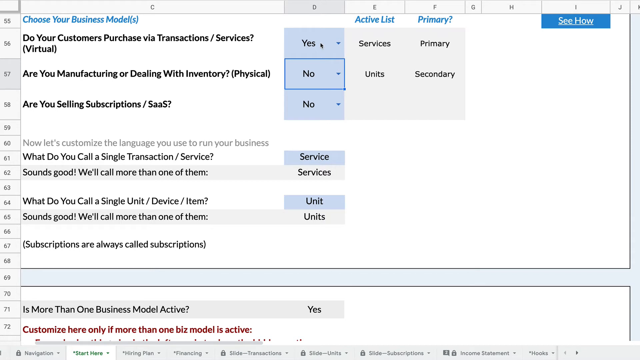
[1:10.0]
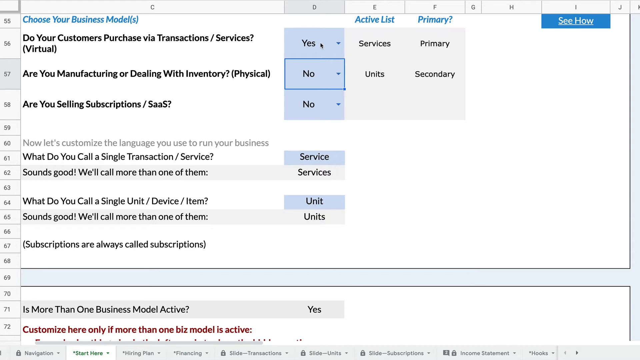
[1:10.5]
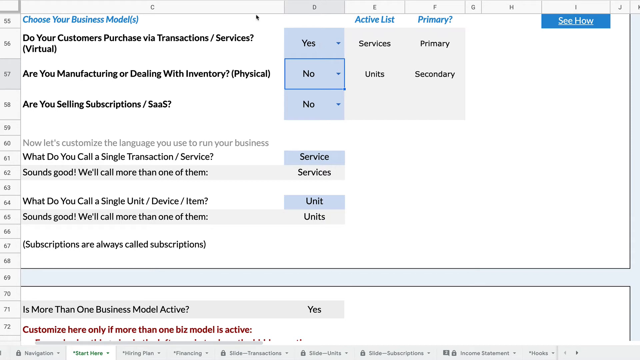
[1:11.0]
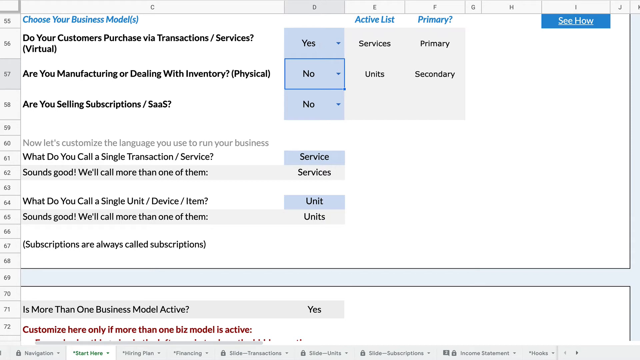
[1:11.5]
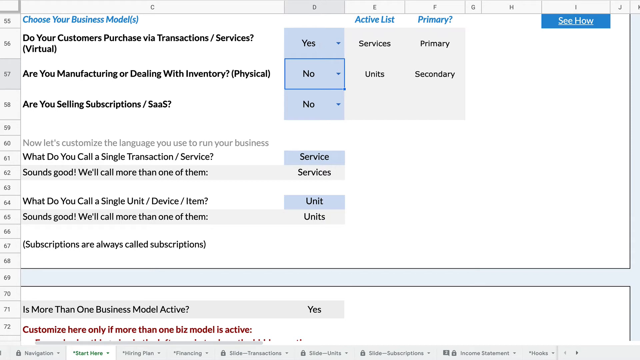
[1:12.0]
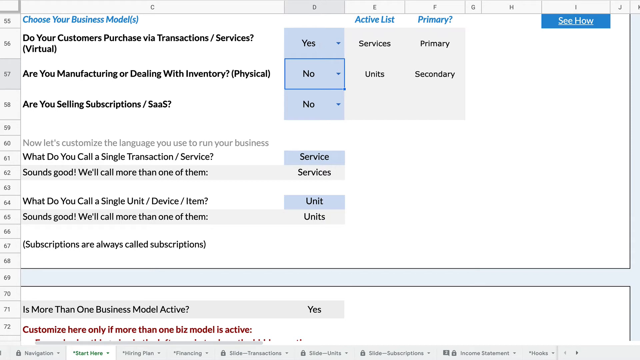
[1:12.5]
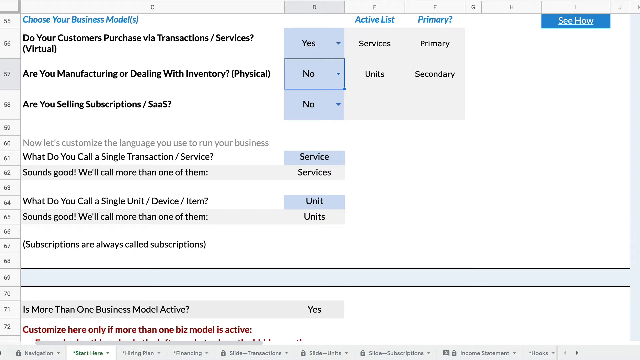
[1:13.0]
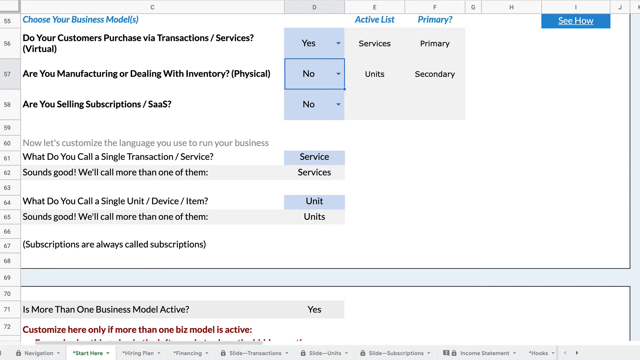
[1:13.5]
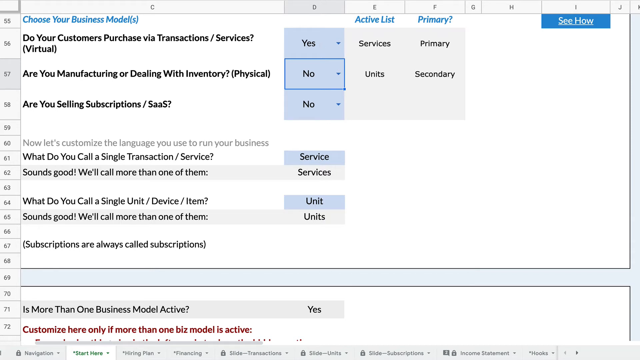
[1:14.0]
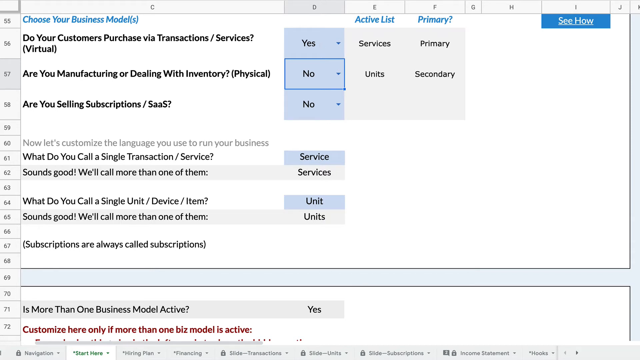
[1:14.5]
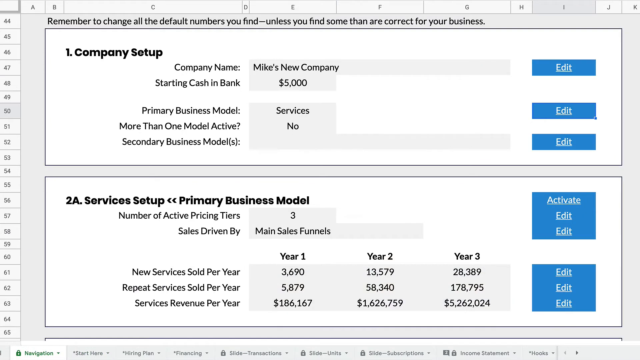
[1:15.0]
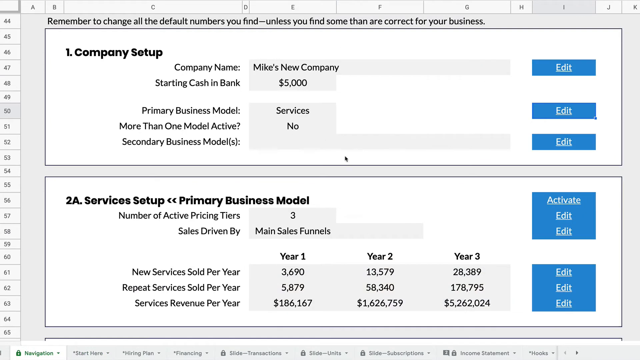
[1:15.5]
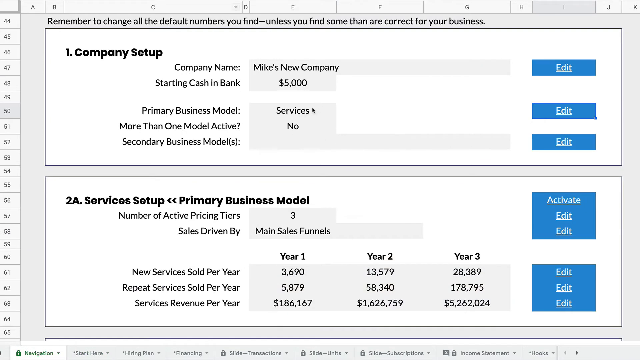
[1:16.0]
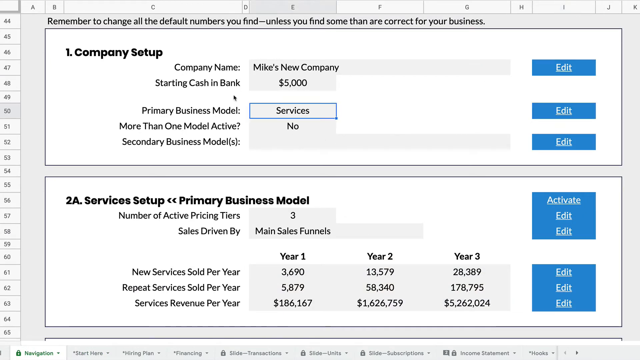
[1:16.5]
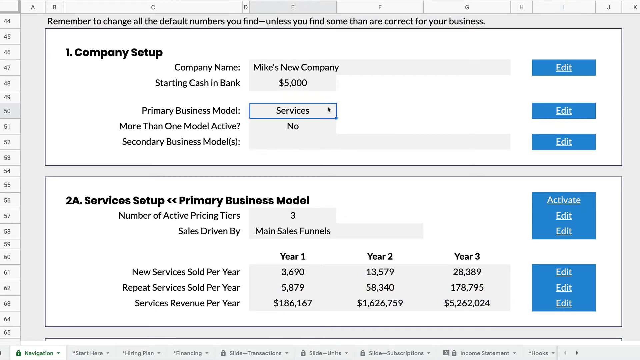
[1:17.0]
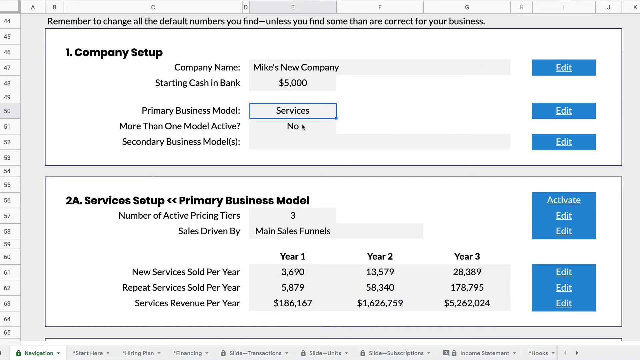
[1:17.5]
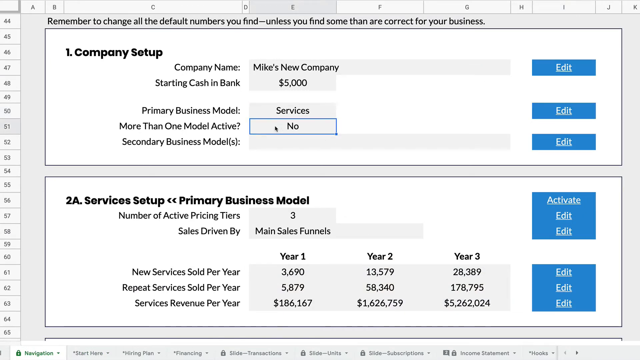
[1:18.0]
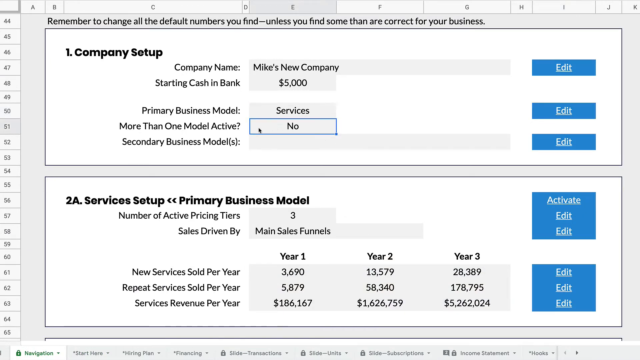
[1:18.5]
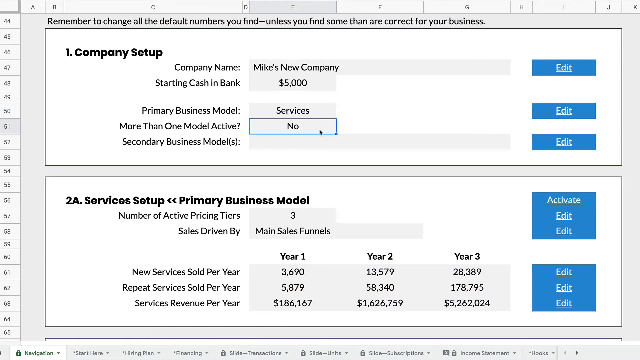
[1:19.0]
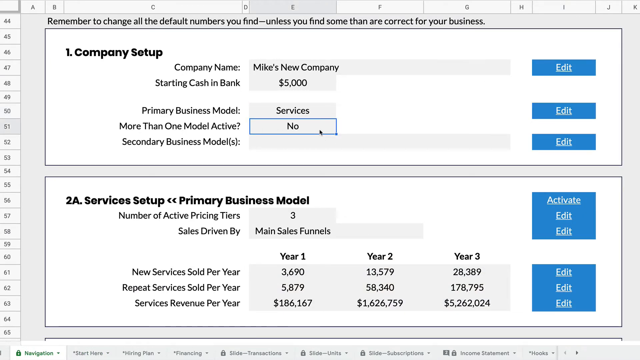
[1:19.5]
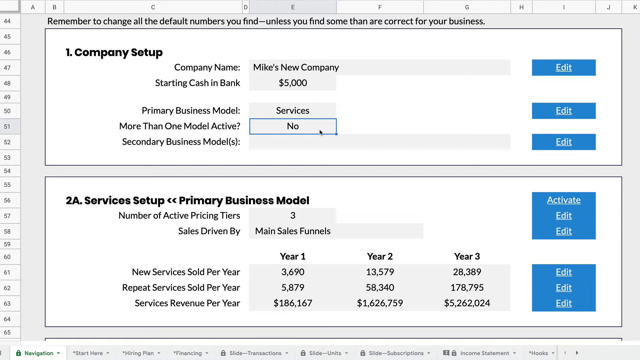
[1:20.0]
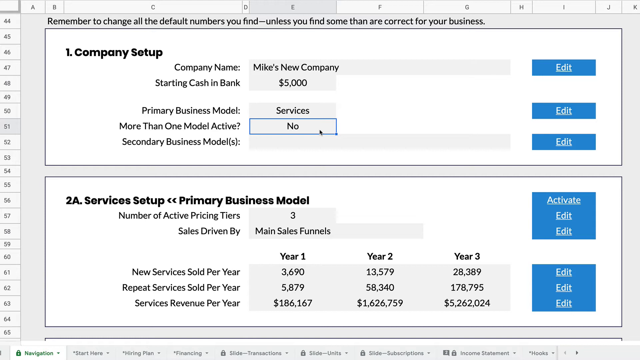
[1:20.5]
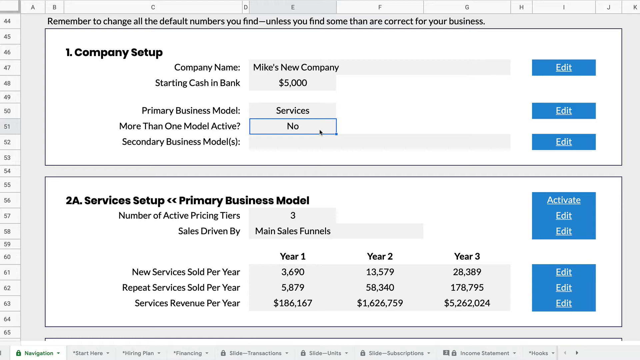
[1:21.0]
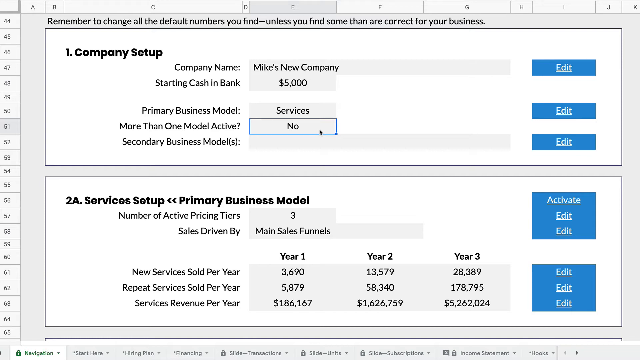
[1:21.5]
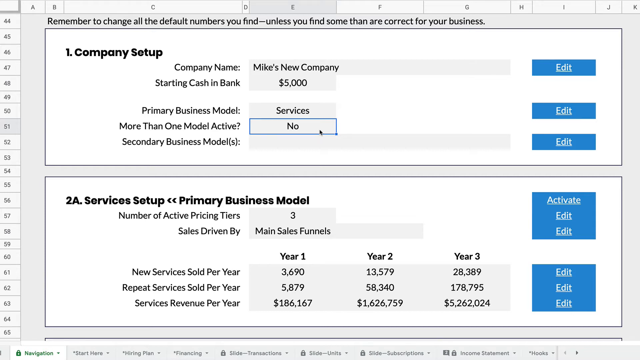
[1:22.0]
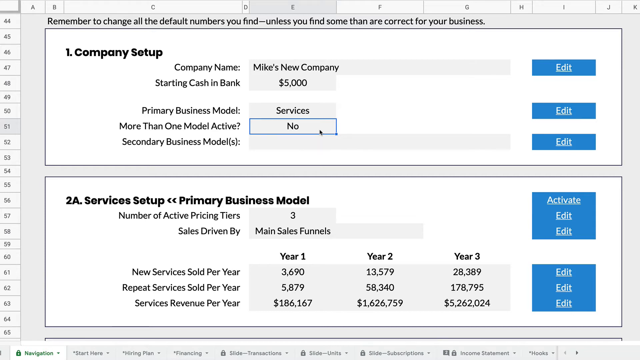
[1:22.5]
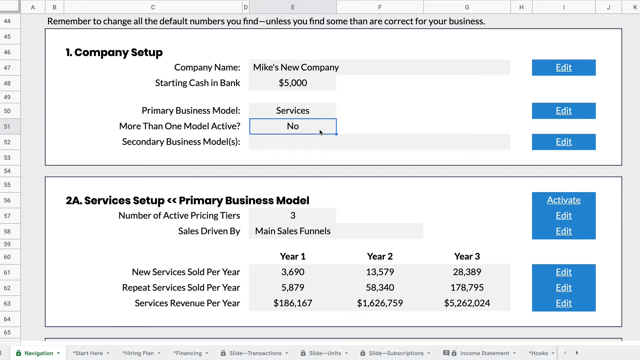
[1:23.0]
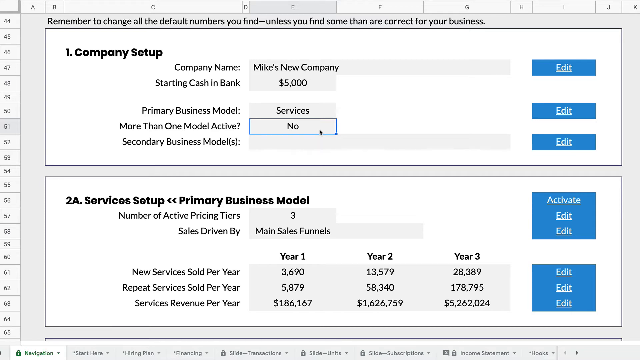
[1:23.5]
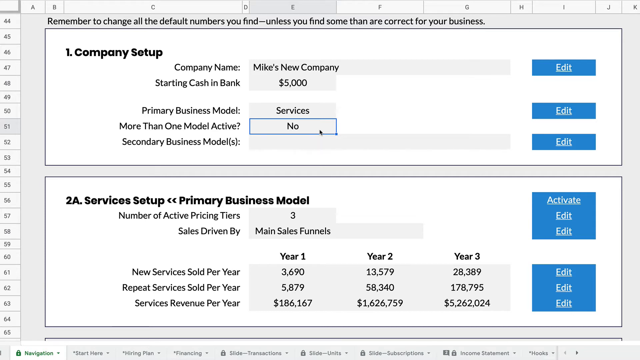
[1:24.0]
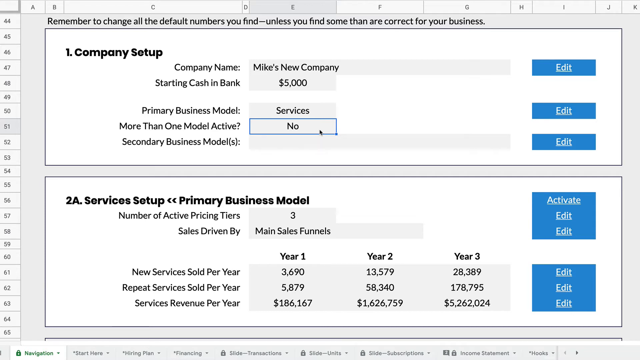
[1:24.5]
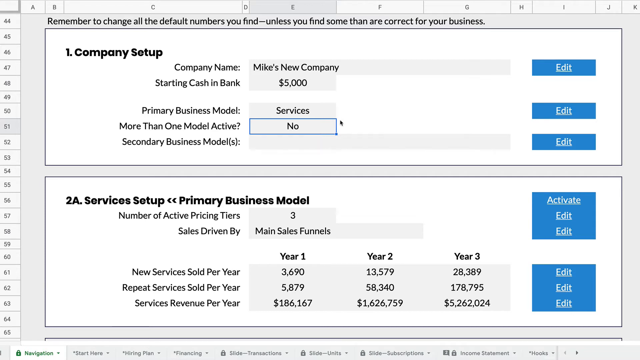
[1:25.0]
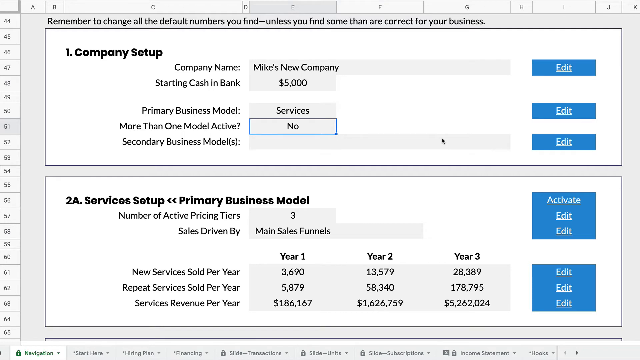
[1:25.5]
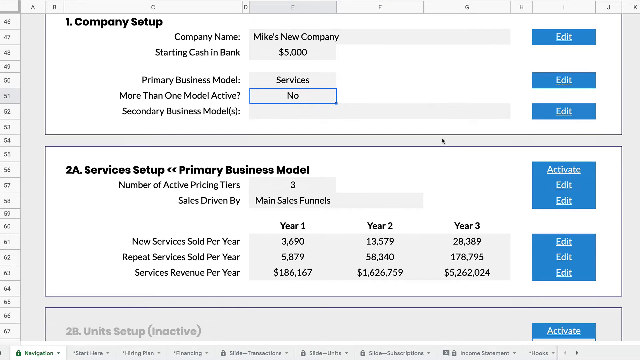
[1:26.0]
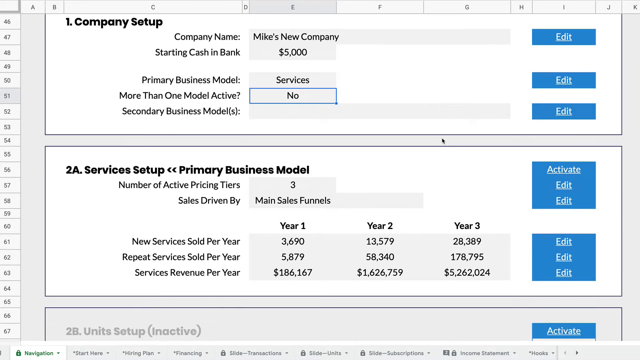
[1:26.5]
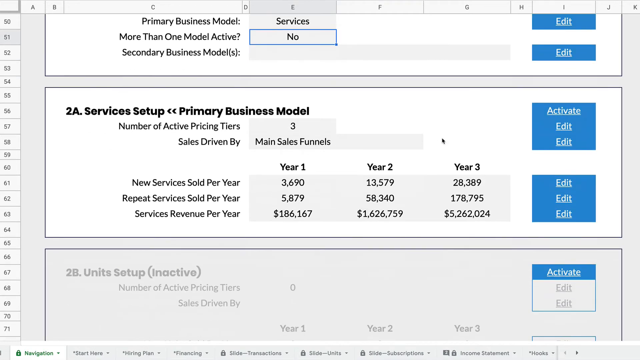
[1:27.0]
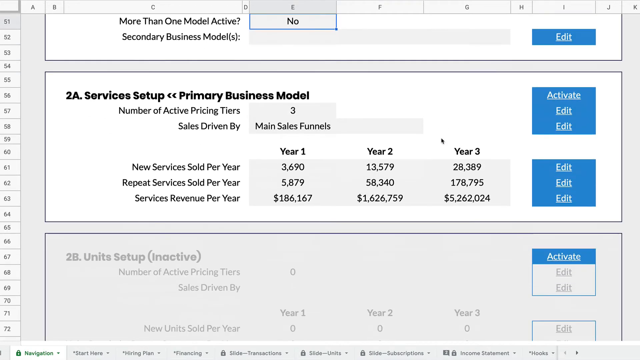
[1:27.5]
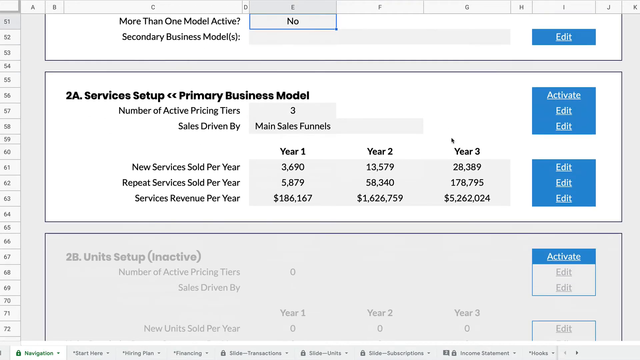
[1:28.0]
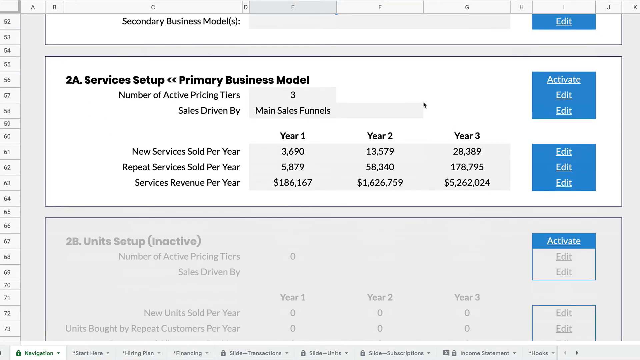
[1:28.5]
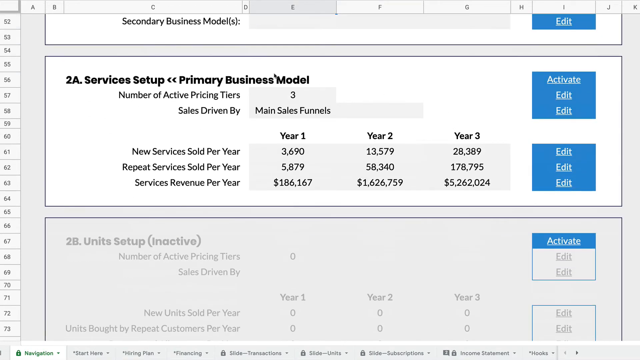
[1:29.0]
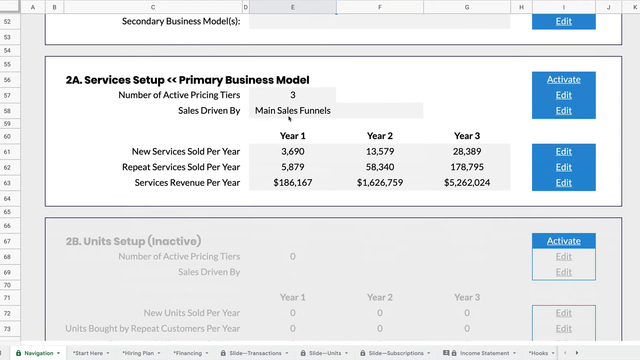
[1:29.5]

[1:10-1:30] From the business model page, the view goes to Company Setup, where services is clicked and "More than one model active" is set to No, with the cursor hovering there. Company Setup now shows the company name, starting cash and bank at 5,000, primary business model as services, more than one model active as No, and no secondary business model. The view scrolls down to Services Setup, showing more parameters: primary business model, number of active pricing tiers at three, sales driven by main sales funnels, and year one, year two, and year three values for new services sold per year, repeat services sold per year, and services revenue per year. Edit buttons sit next to nearly all of the options.